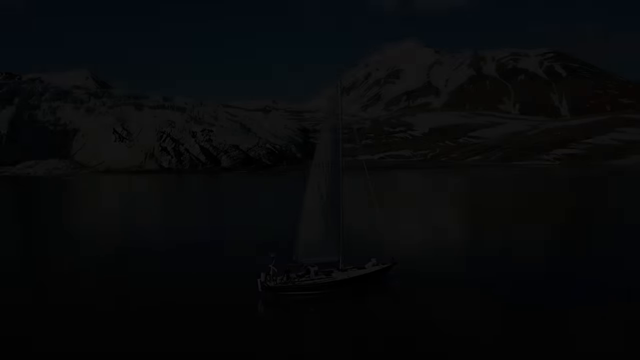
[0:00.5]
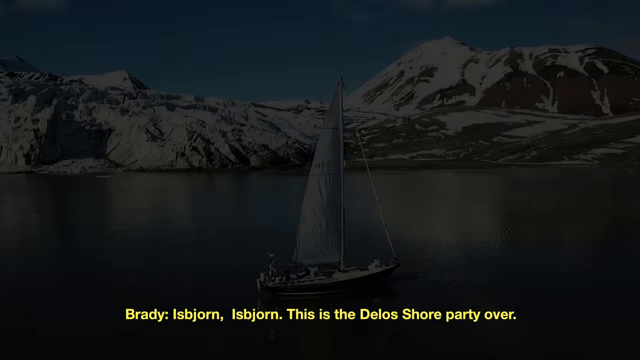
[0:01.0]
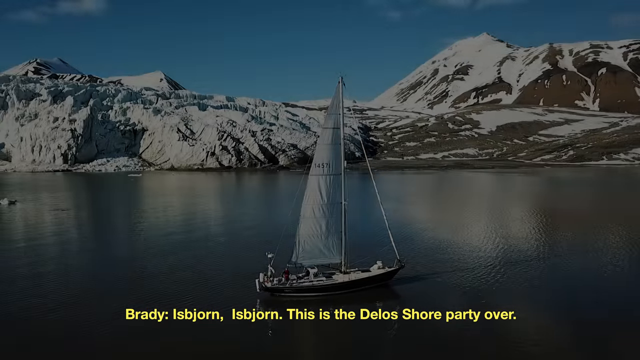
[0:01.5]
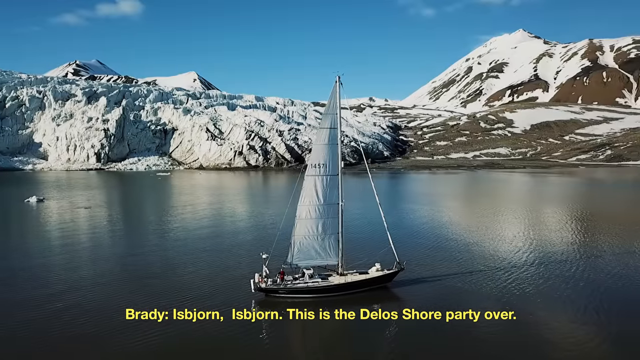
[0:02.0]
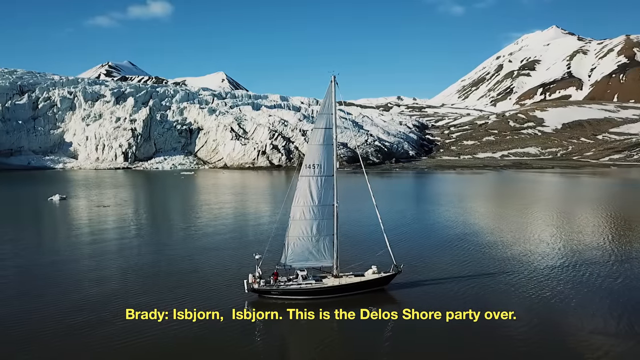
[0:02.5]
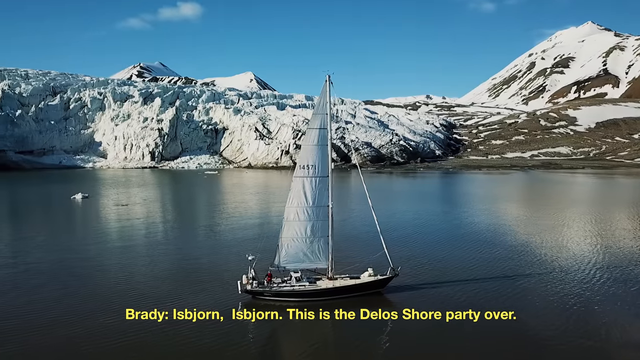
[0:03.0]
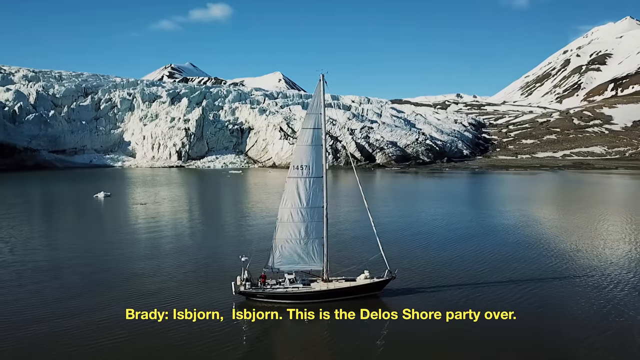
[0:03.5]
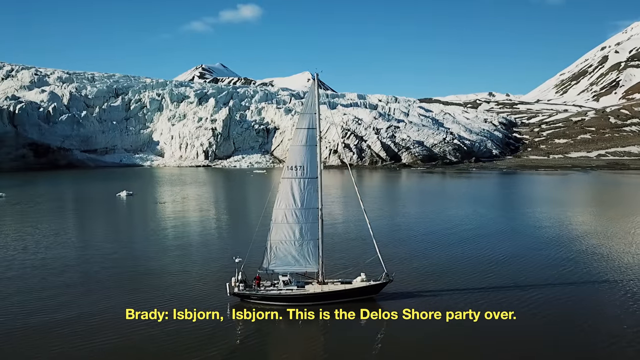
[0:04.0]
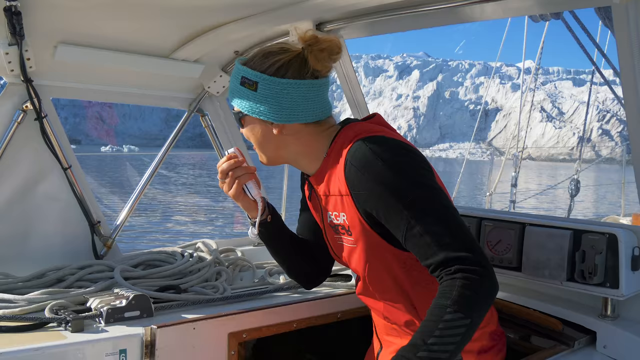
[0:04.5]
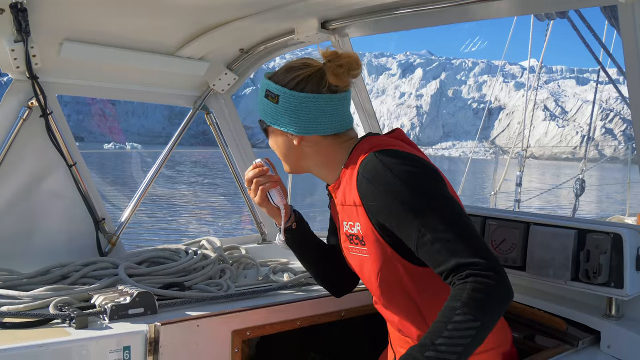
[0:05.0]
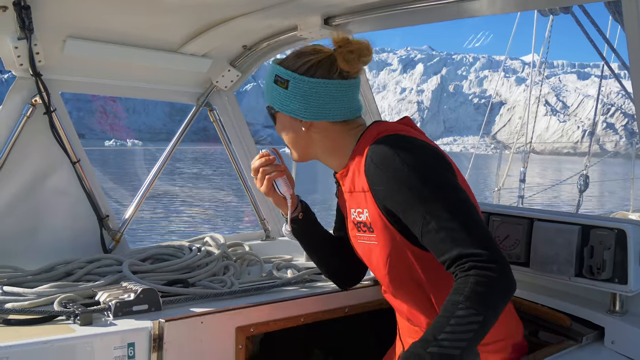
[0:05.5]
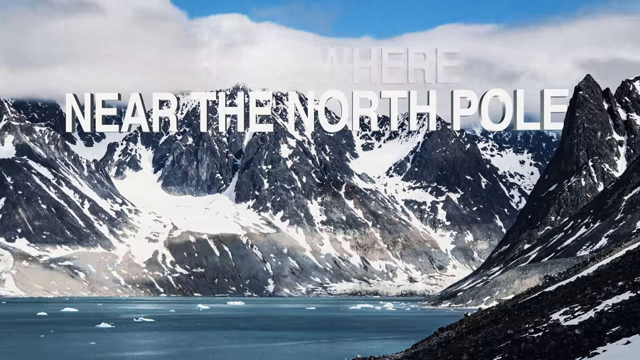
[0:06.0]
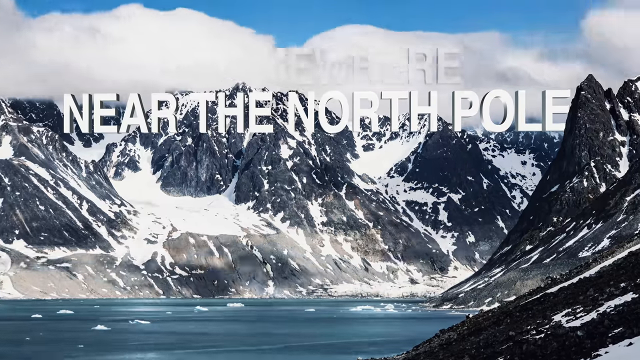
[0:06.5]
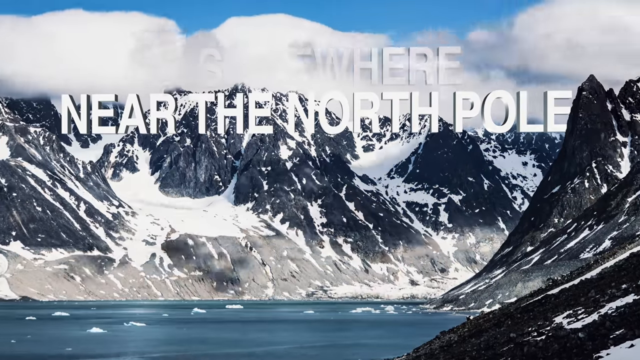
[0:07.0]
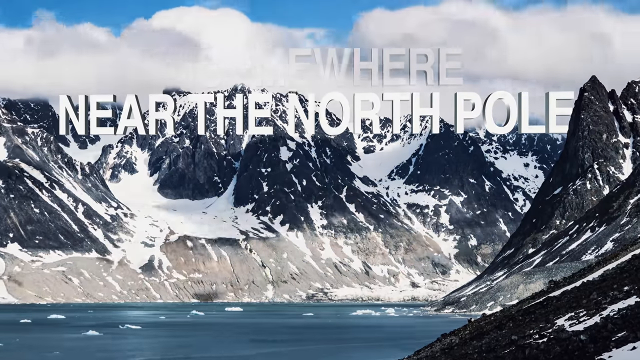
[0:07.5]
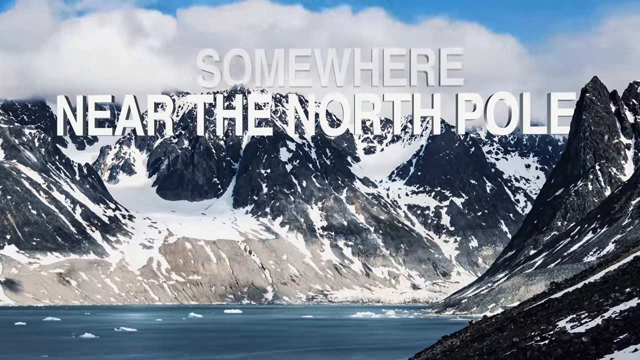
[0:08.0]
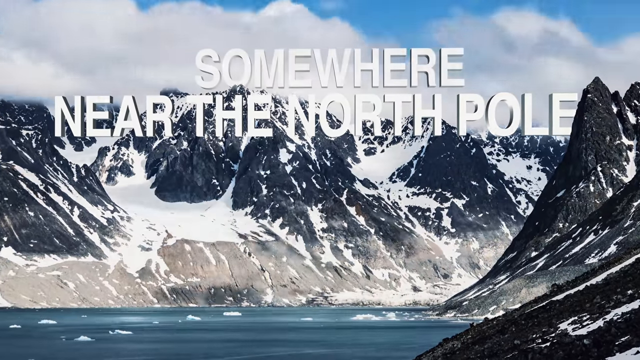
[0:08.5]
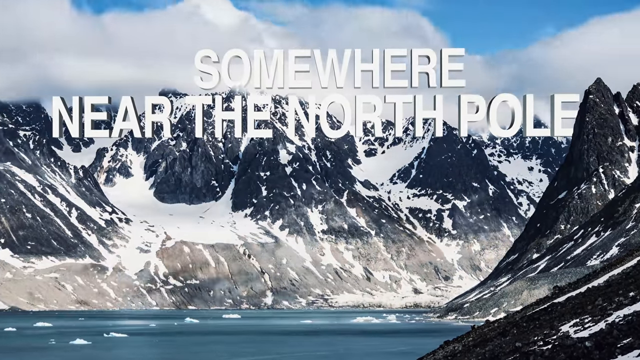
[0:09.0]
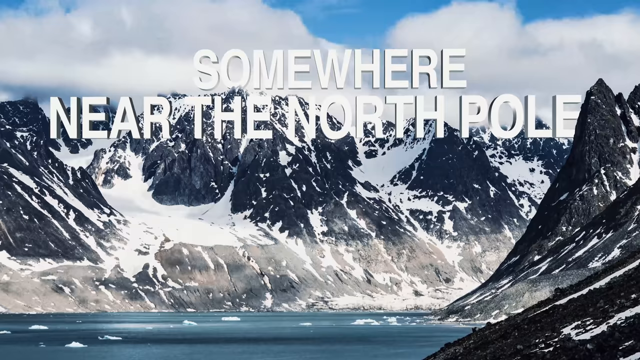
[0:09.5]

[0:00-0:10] A sailboat sails on a lake, with the text "somewhere near the North Pole" on screen. Big mountains with snow on them are visible. The boat looks almost as if it is going backwards and its sails are not full; there is no jib, and from this angle it cannot be told whether the boat is actually moving forward and gaining momentum. A girl on another boat, wearing an orange vest and a blue headband, grabs her walkie-talkie or radio and calls into it, crouching down and looking at the sailboat as she talks. Little boats are in the water behind the sailboat.